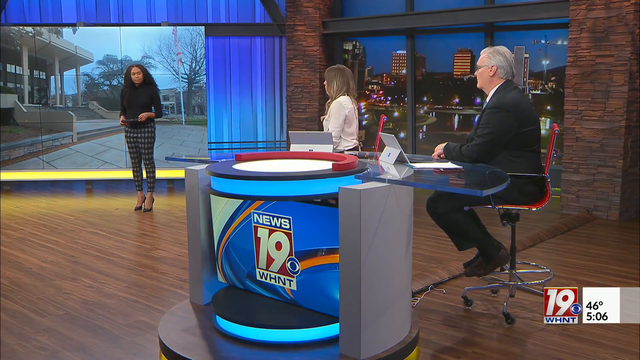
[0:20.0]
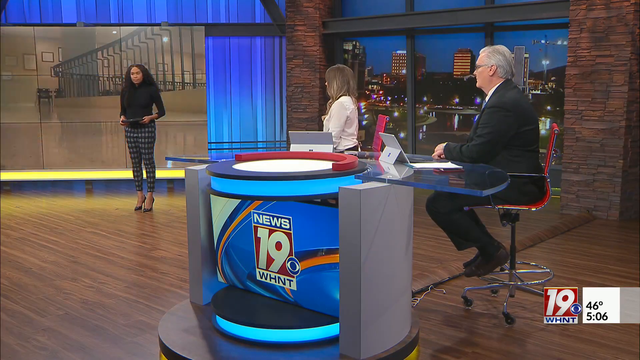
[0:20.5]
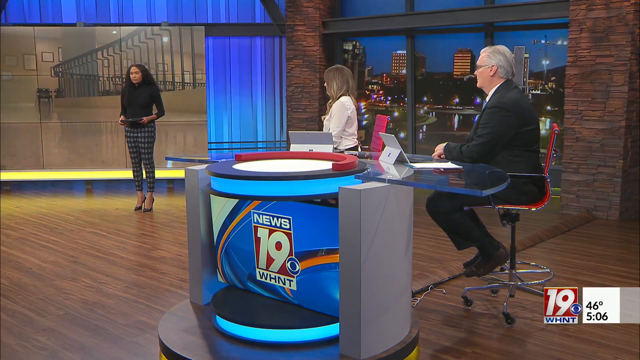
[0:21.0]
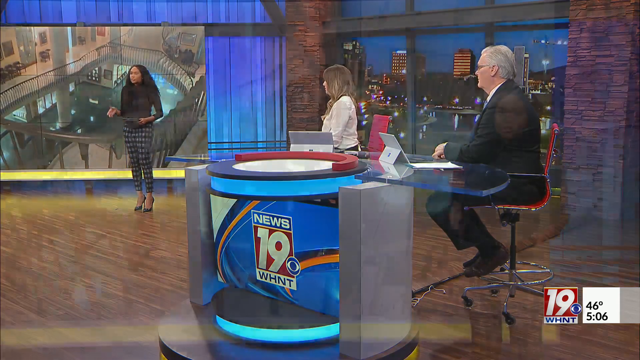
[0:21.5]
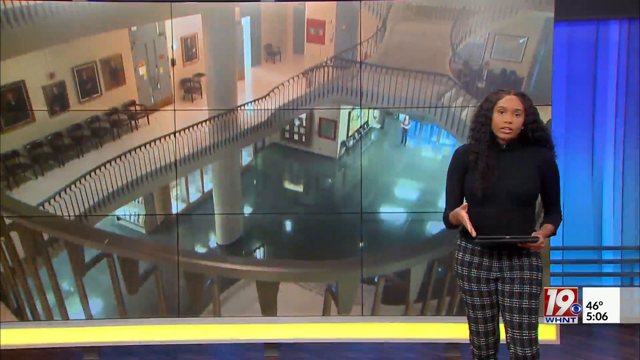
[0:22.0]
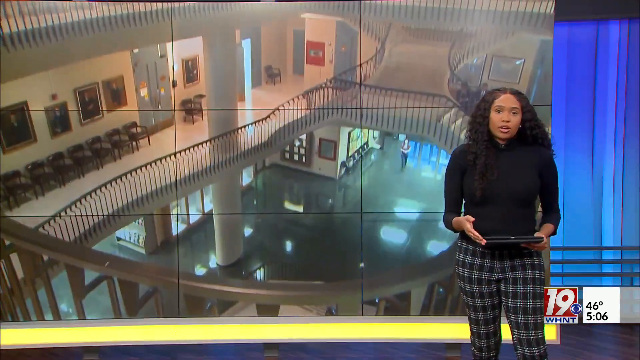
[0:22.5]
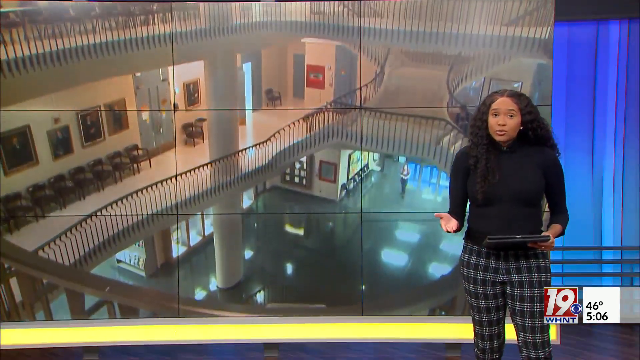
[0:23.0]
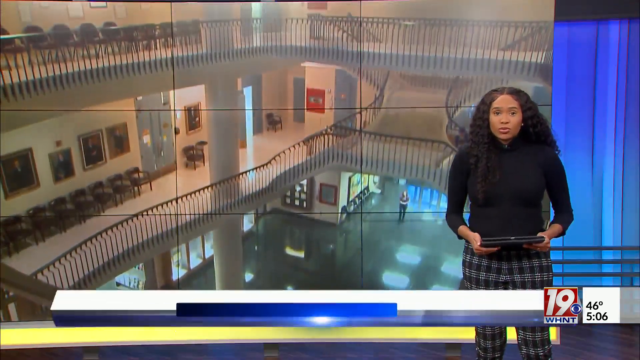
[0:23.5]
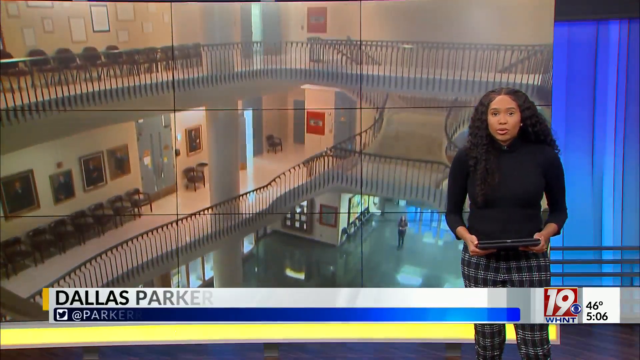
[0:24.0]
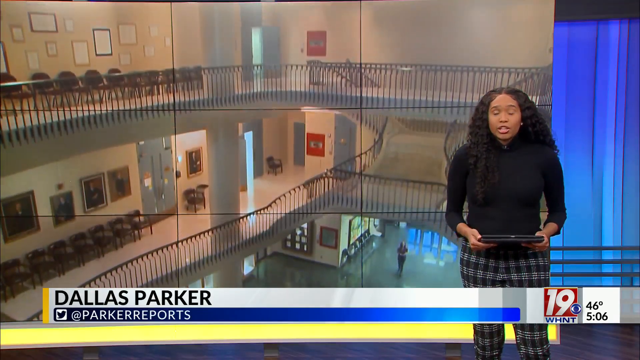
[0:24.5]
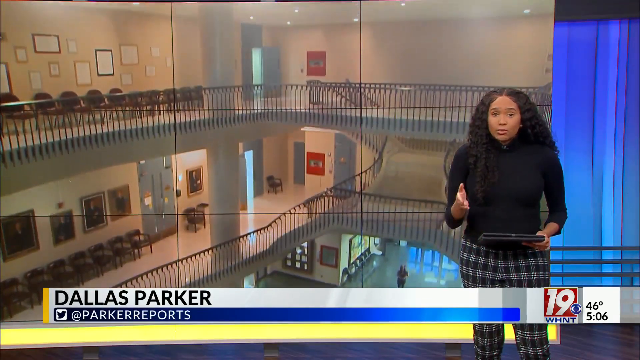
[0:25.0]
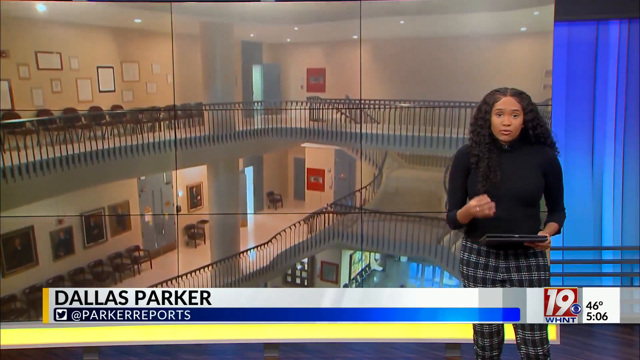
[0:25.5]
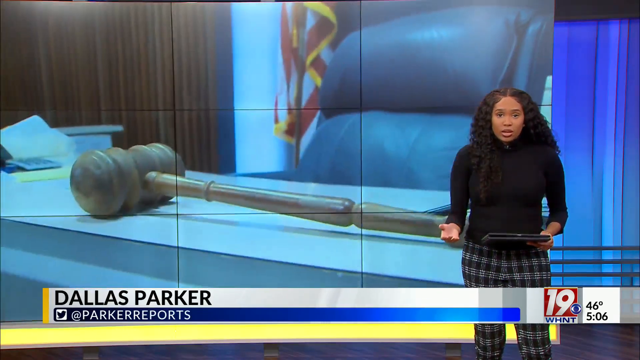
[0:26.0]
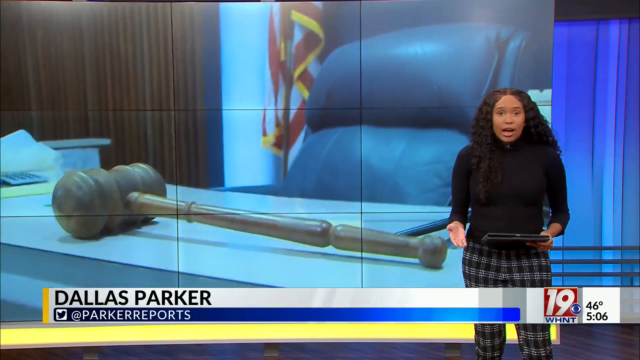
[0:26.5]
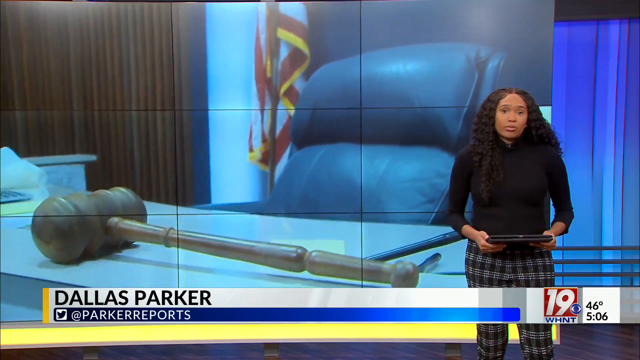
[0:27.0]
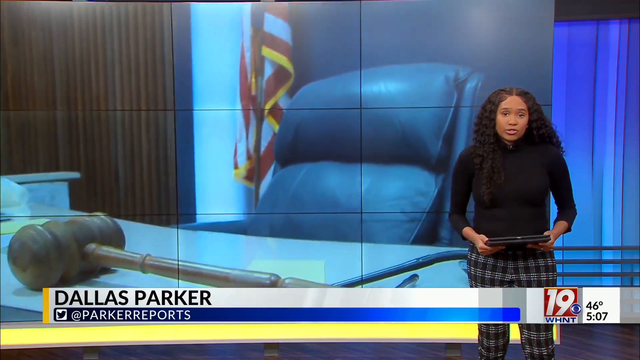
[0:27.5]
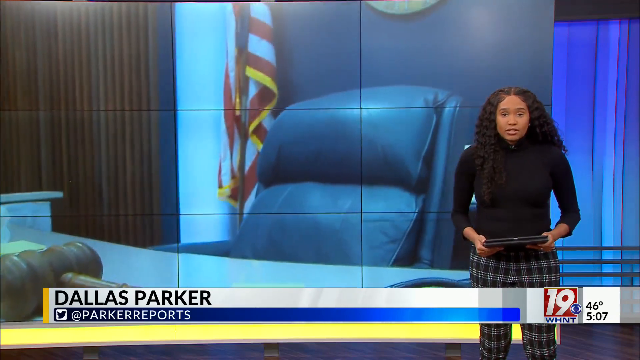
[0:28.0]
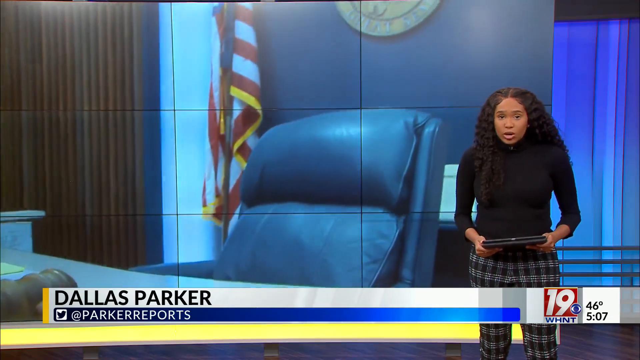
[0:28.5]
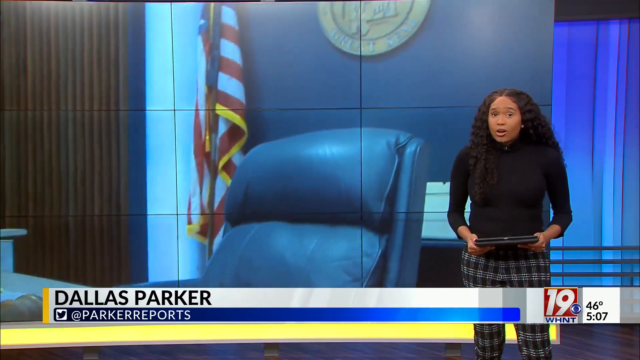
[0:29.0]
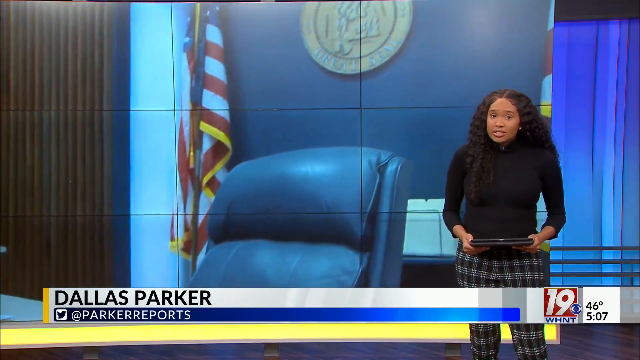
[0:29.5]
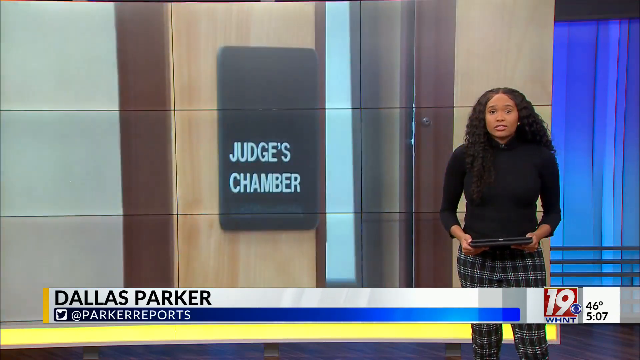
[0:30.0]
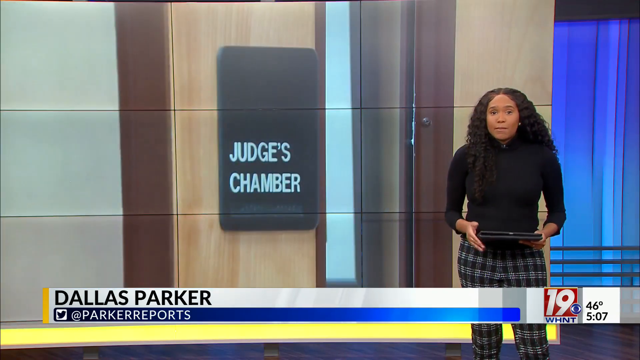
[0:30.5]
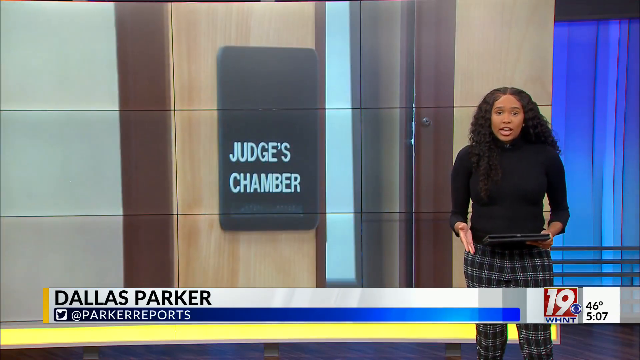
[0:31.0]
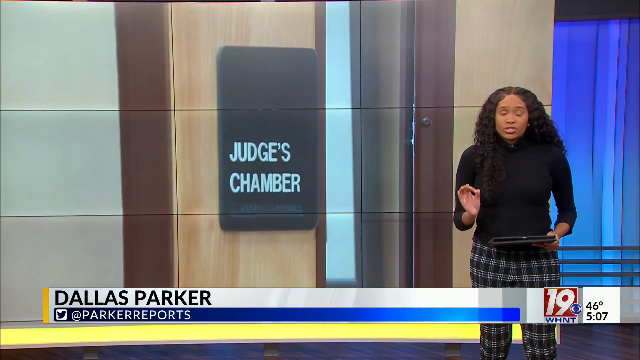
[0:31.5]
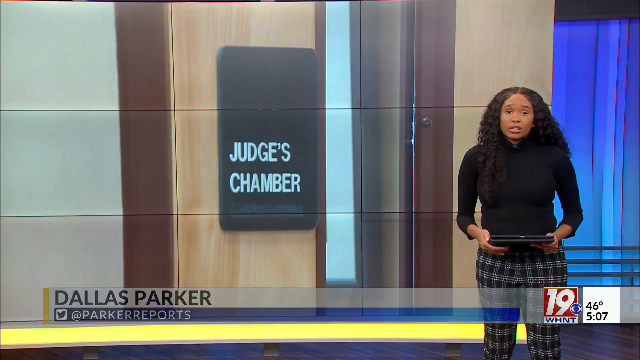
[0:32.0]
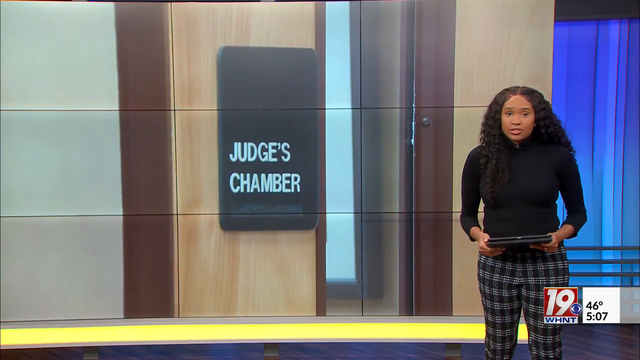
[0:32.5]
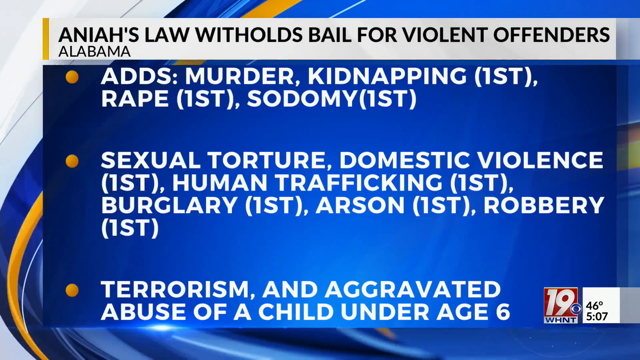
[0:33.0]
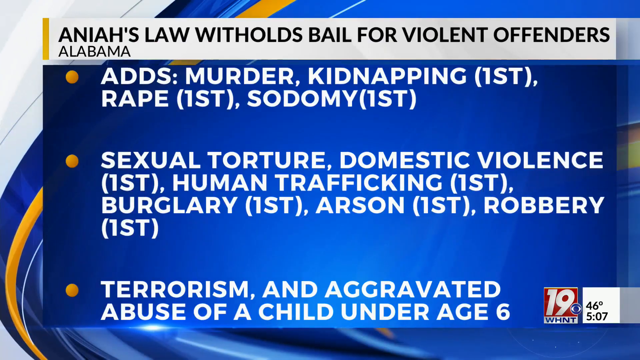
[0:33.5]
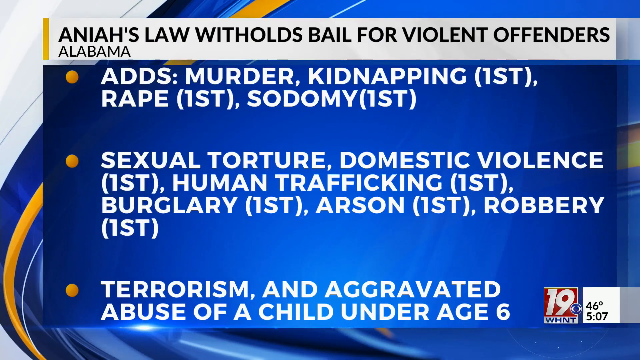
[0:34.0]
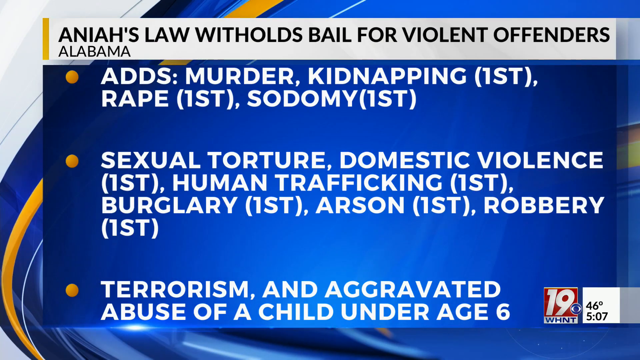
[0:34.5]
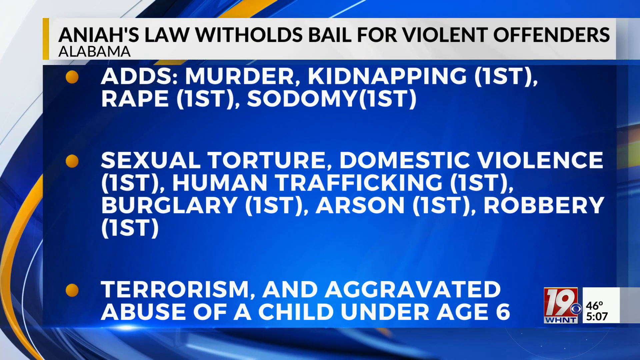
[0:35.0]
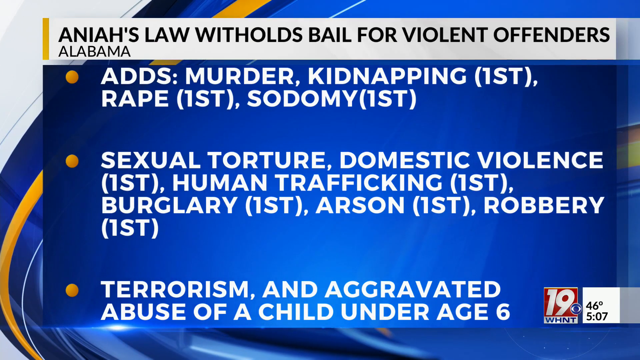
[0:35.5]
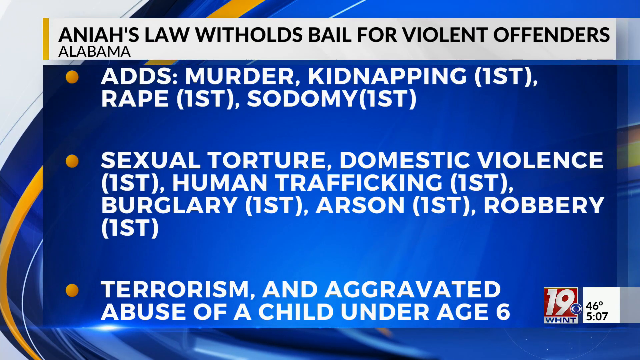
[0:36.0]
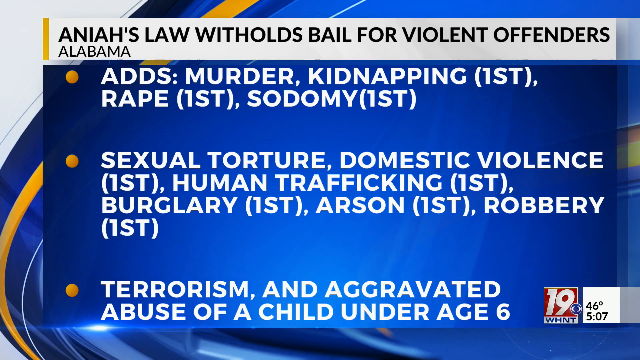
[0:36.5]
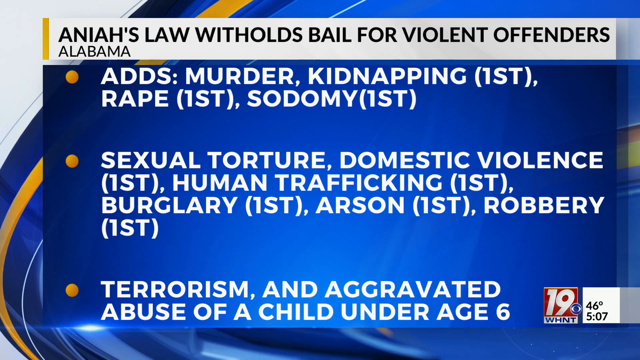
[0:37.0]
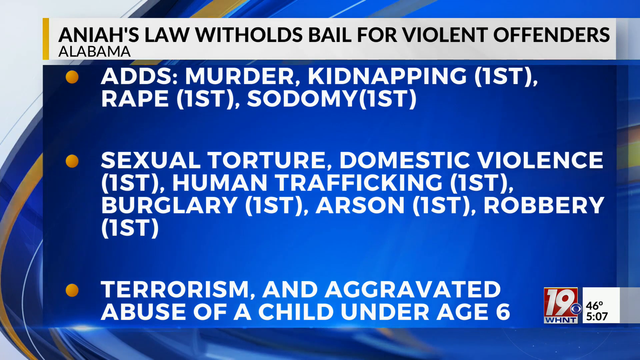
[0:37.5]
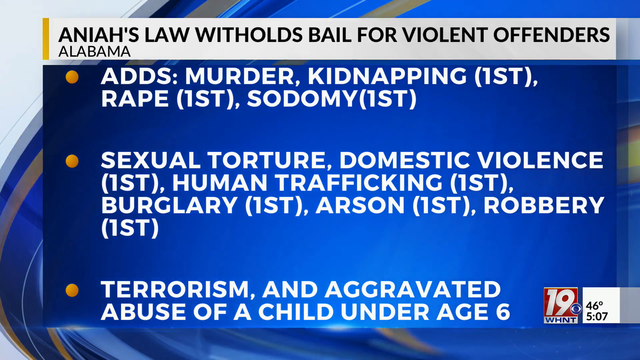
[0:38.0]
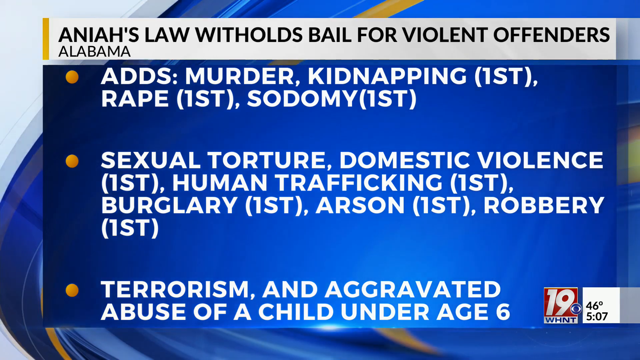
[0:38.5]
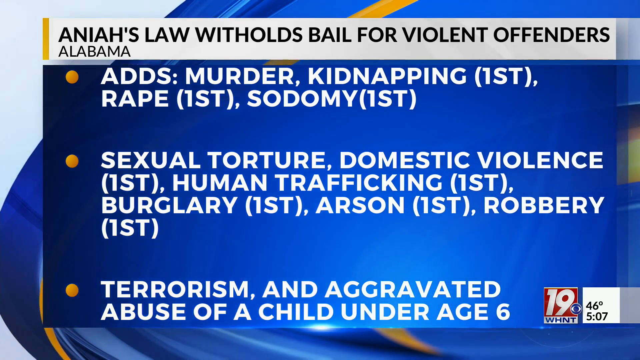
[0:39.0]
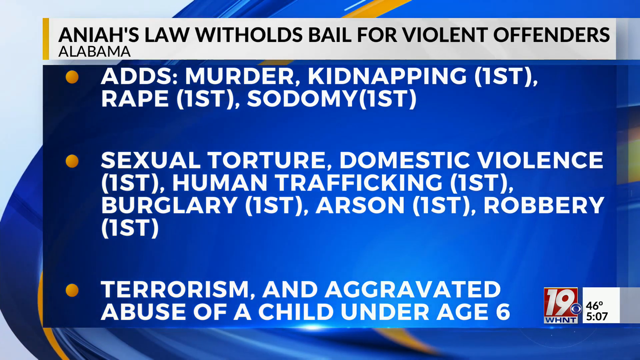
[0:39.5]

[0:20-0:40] The focus moves to the reporter on the left, who wears a black shirt, black and white checkered pants and black heels, and has long black curly hair. She begins to talk, holding an iPad in her hand. The inside of the building is shown; it has a couple of floors, apparently three. Her name, Dallas Parker, appears with her Twitter handle "@Parkereeports" underneath. Next, the judge's chambers are shown, and the report concerns a new law in Alabama called Aniah's Law, which withholds bail for violent offenders and adds rape, murder, sodomy, kidnapping, sexual torture, domestic violence, human trafficking, burglary, arson, robbery, terrorism and aggravated abuse of a child. It appears to be a new law or new offenses that will not allow bail.